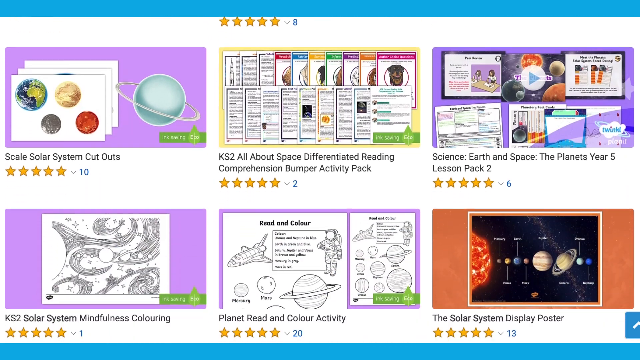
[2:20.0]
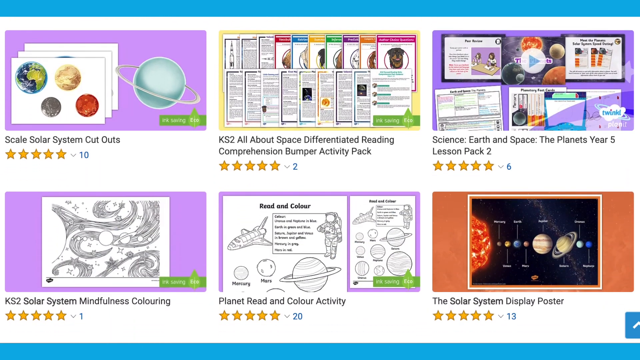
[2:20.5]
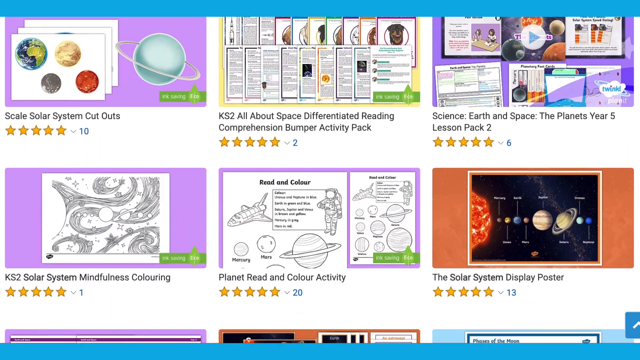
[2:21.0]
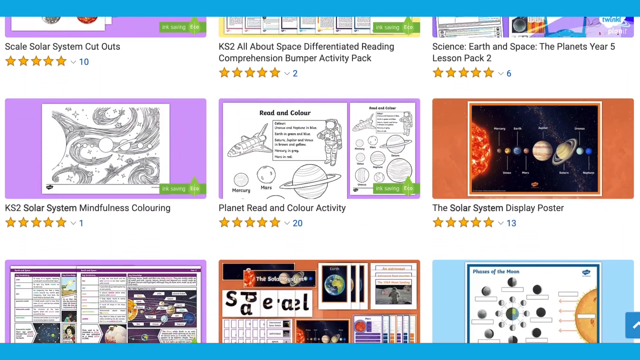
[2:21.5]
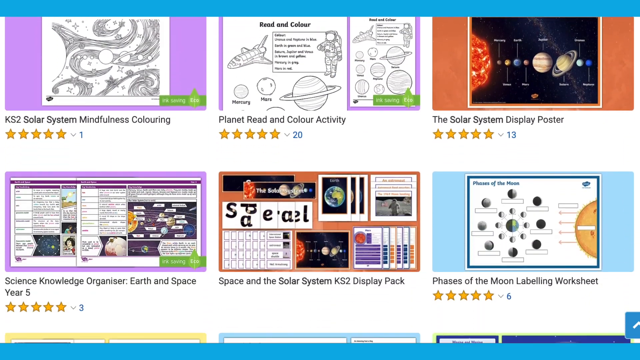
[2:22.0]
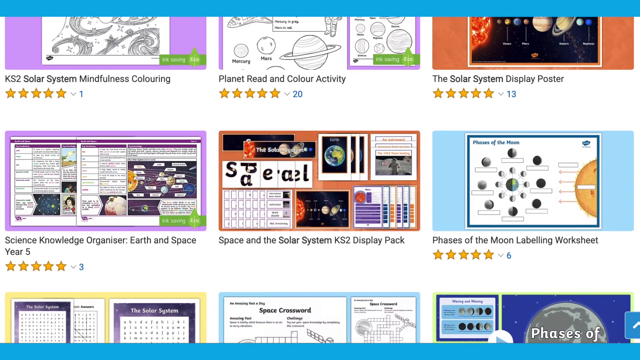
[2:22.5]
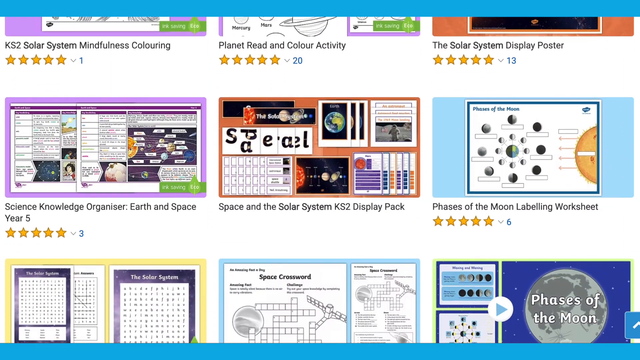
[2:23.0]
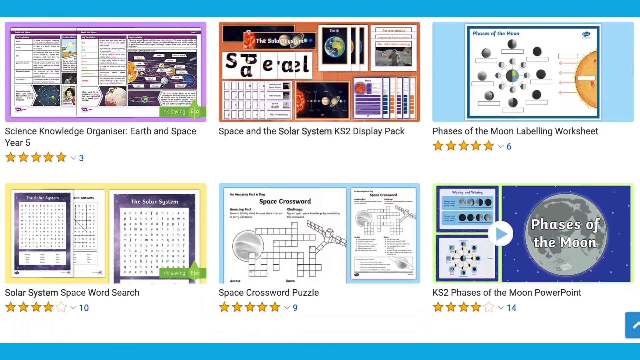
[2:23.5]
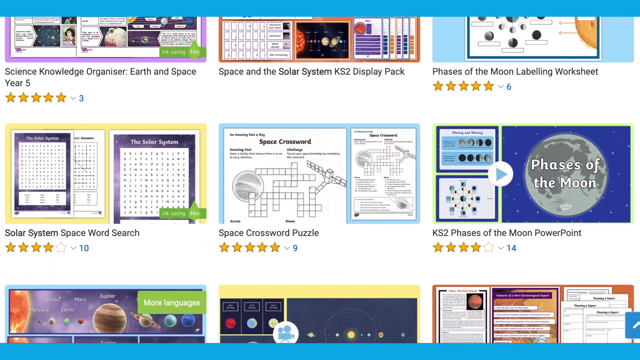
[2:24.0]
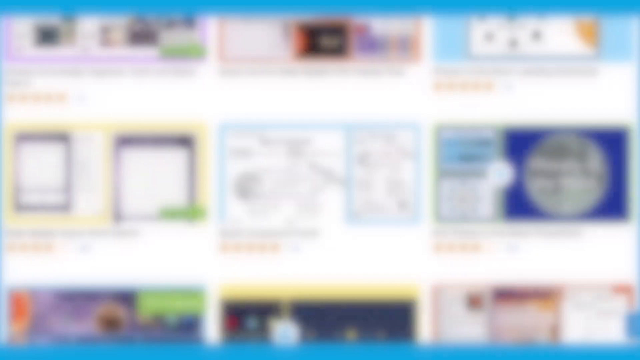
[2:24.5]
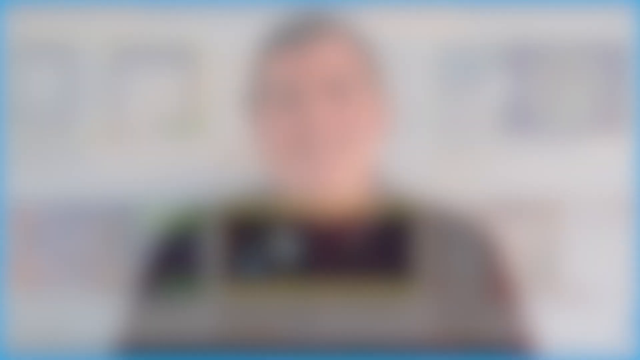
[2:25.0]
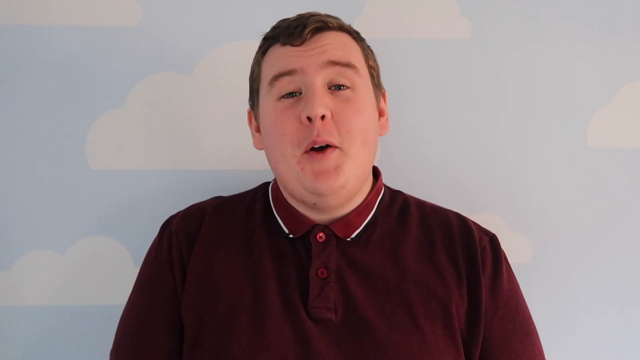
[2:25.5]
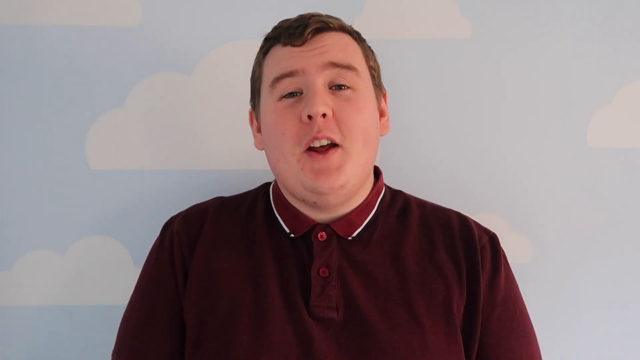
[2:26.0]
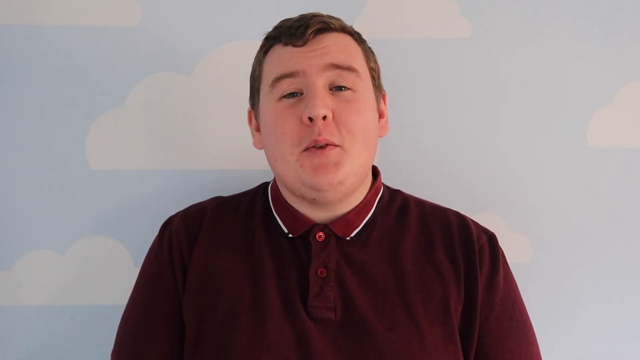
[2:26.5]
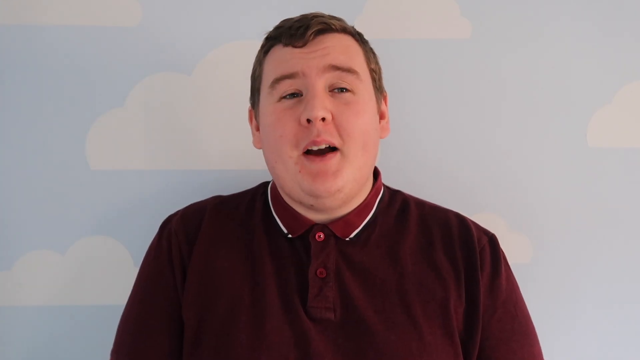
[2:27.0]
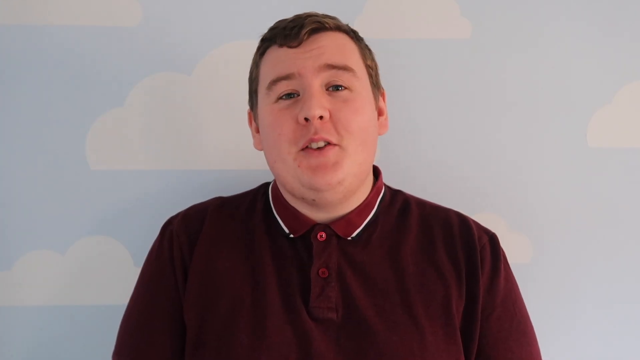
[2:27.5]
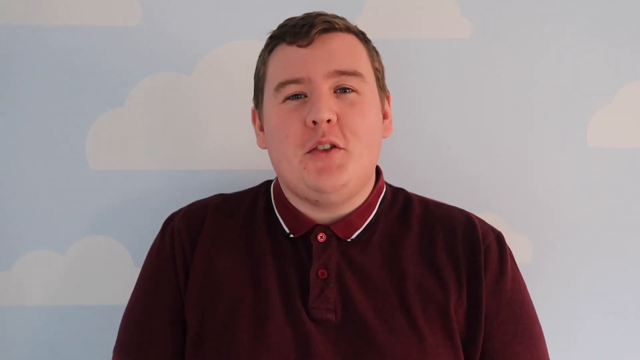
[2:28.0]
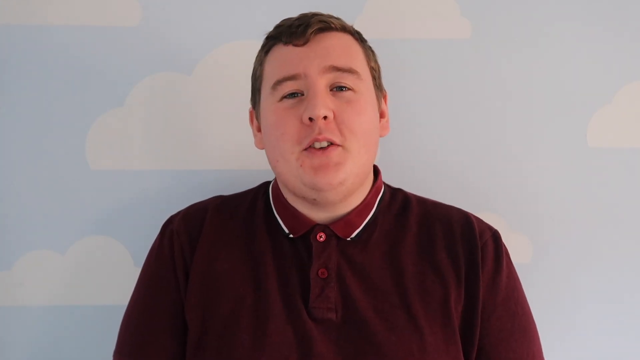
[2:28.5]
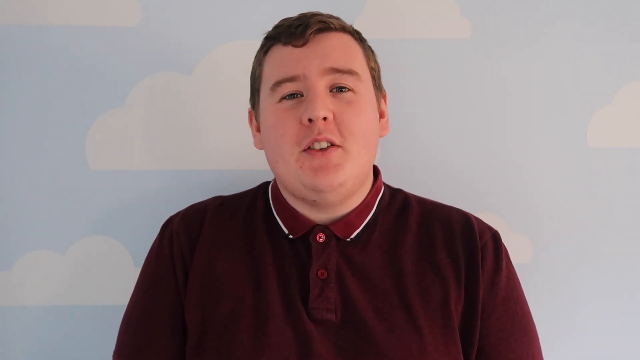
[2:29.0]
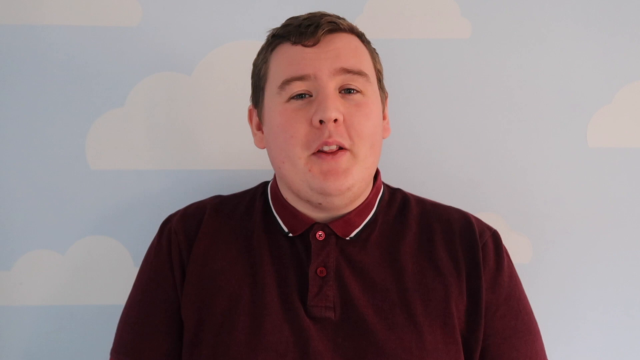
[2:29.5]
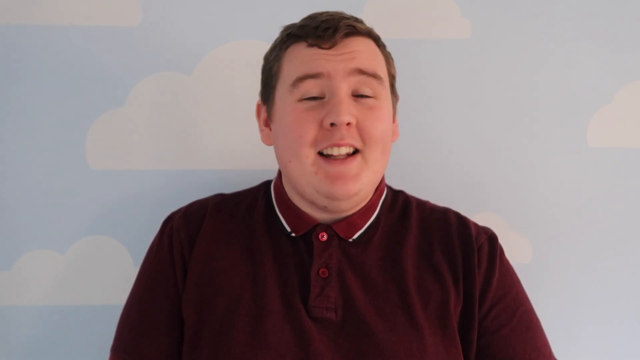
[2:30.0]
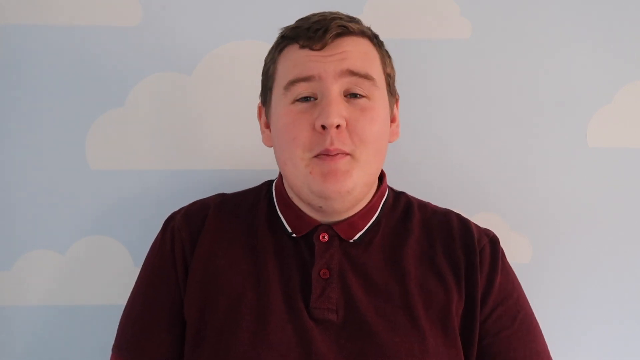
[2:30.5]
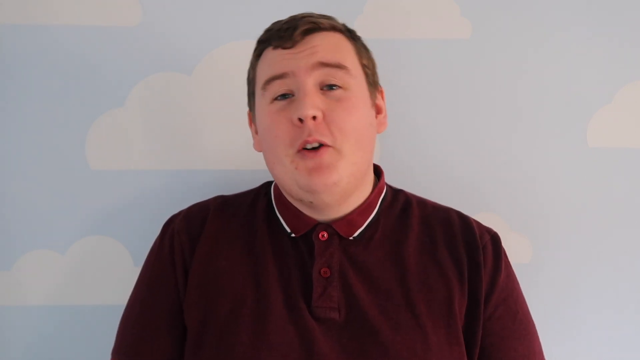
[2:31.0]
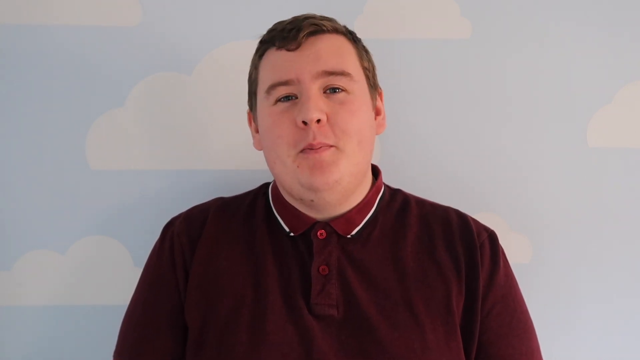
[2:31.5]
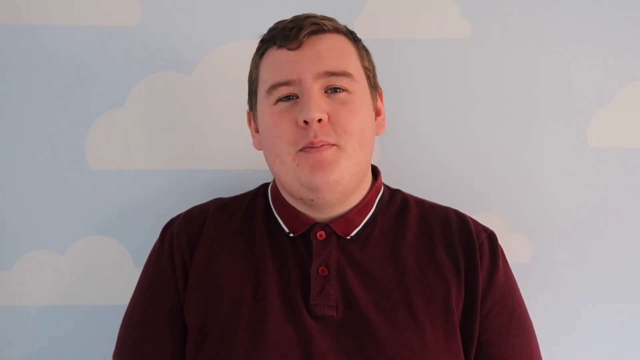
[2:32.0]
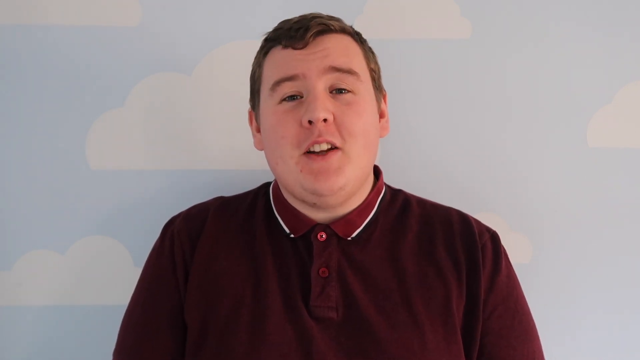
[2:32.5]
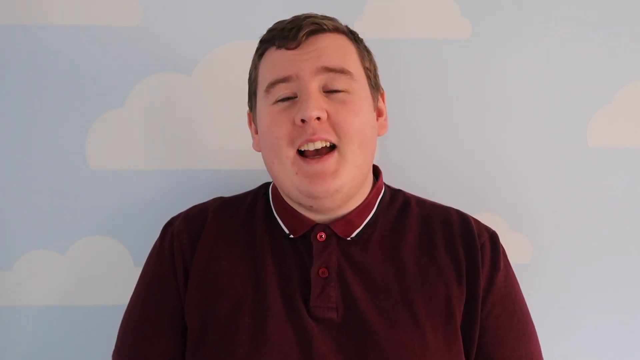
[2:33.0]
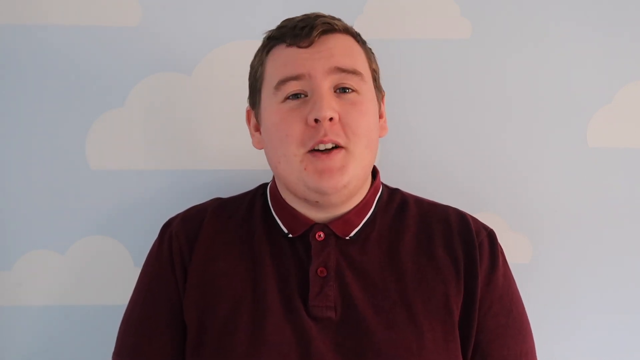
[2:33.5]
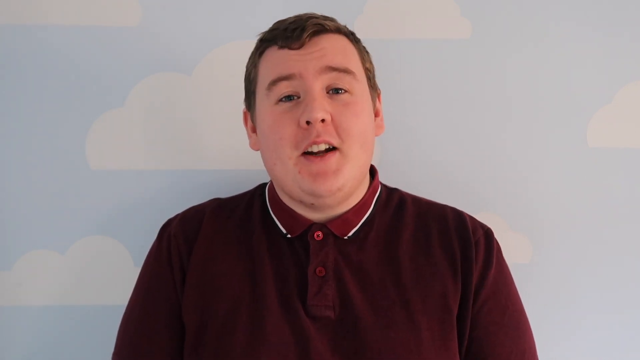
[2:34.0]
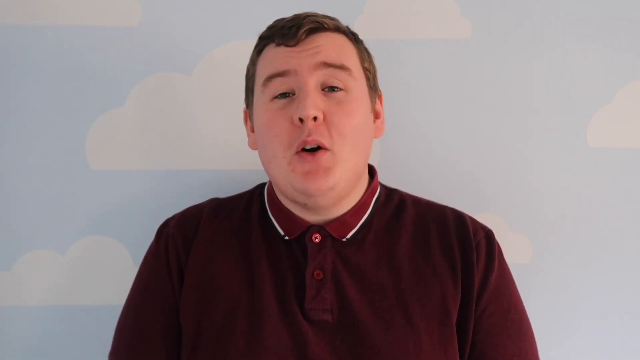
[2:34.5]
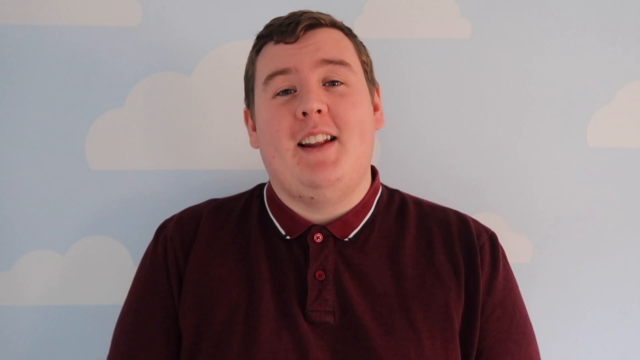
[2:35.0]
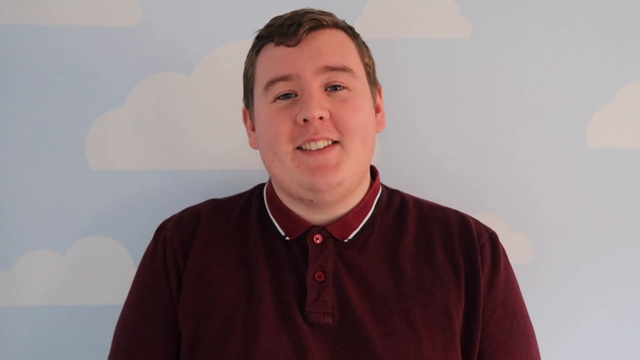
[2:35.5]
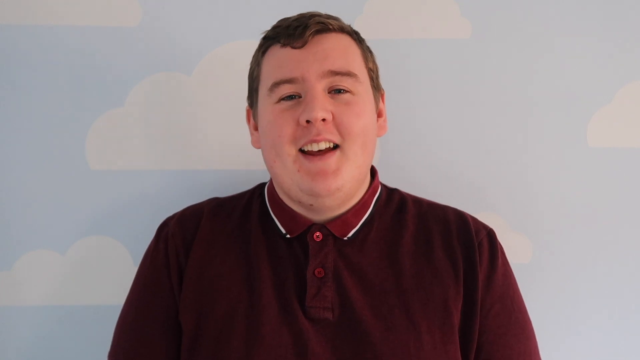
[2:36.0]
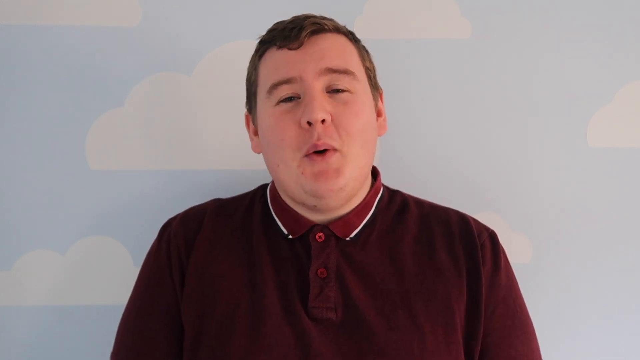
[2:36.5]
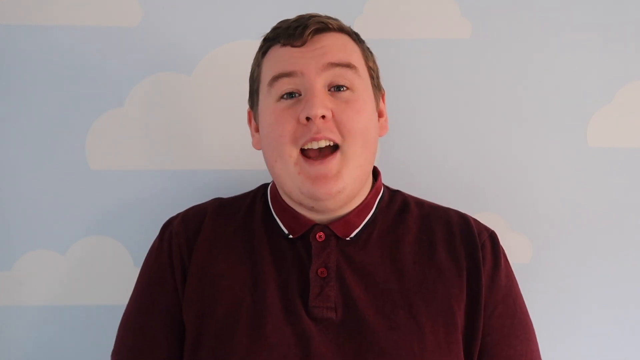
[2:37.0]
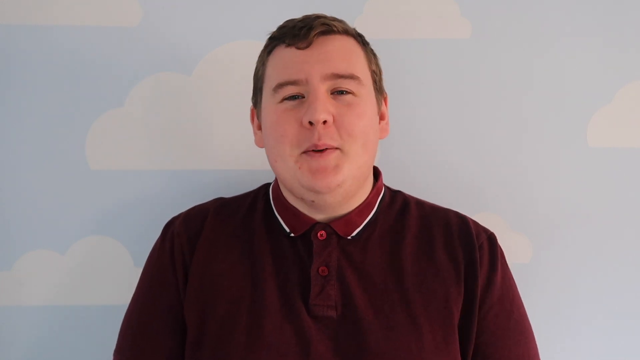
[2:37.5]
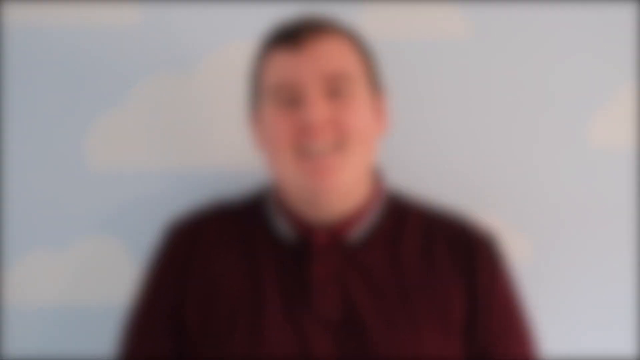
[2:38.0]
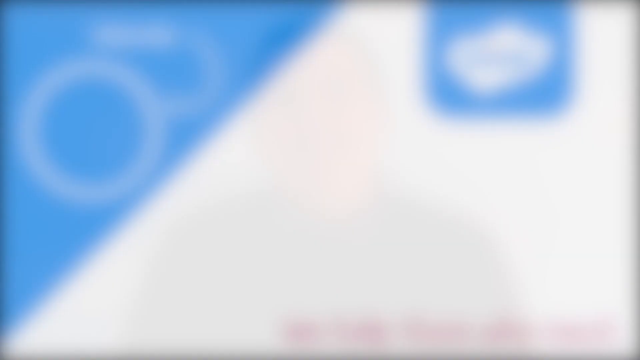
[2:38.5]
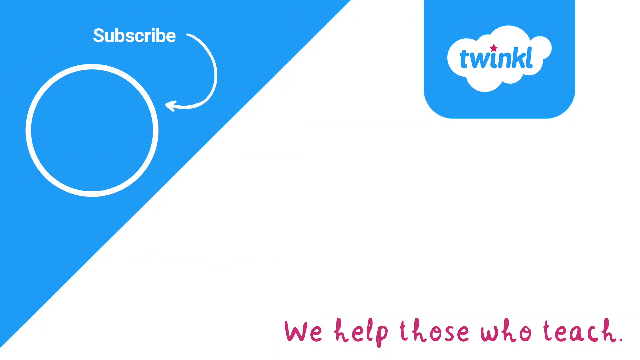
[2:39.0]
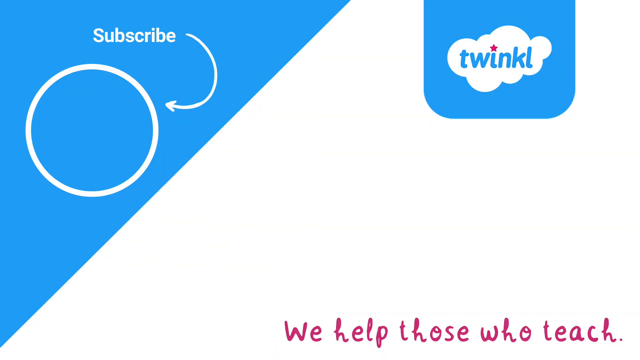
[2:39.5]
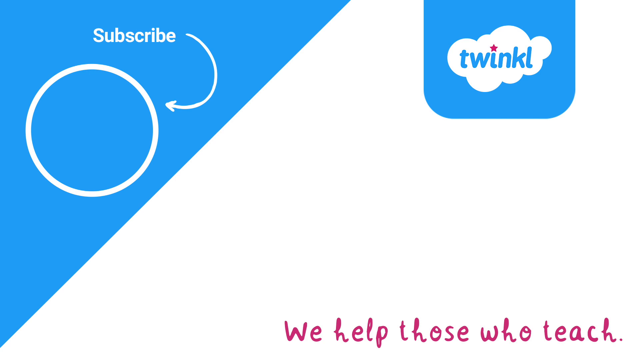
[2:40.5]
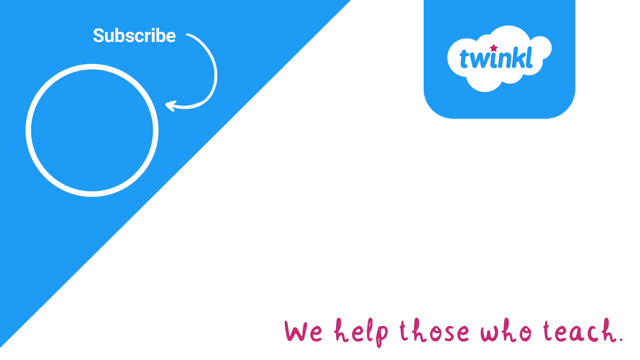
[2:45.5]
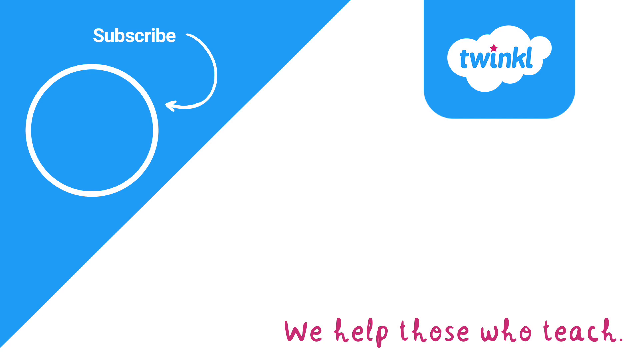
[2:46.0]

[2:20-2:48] The download website shows titles beneath cards that represent what would be downloaded, each with star ratings and reviews. "Scale Solar System Cutouts" has a 5 out of 5 star rating and 10 reviews, and "Space Earth and Space, the Planet's Year 5 Lesson Pack 2" has a 5 out of 5 star rating and 6 reviews. The page scrolls down through the many titles available to download. At the end of the video, the man in a maroon button-up shirt speaks directly to the camera in front of a light blue wall with light white clouds printed on it. The website is named TWINKL.